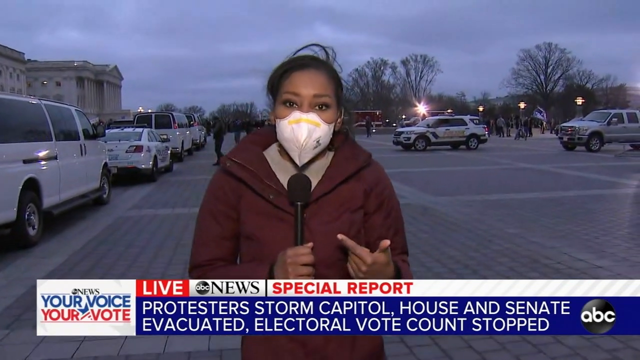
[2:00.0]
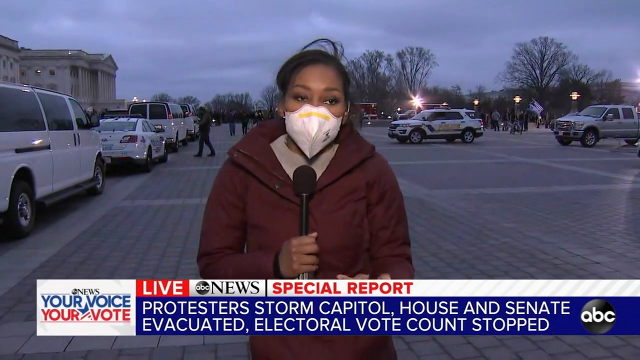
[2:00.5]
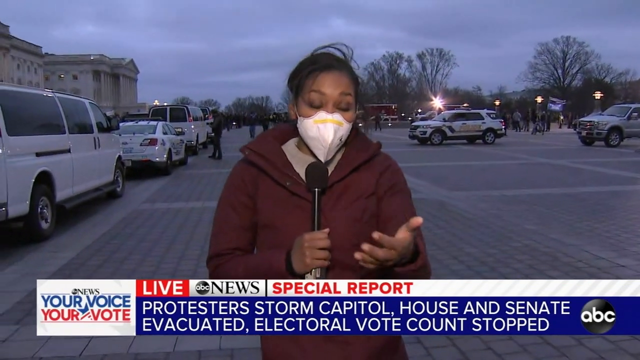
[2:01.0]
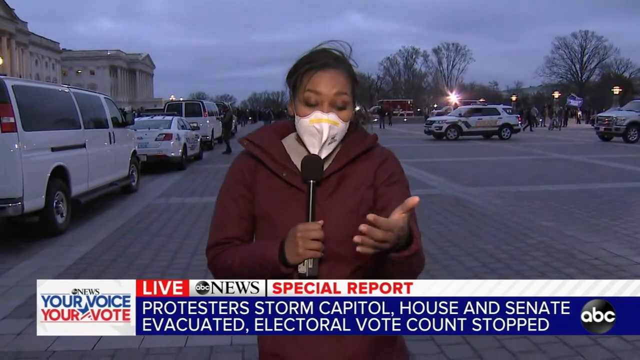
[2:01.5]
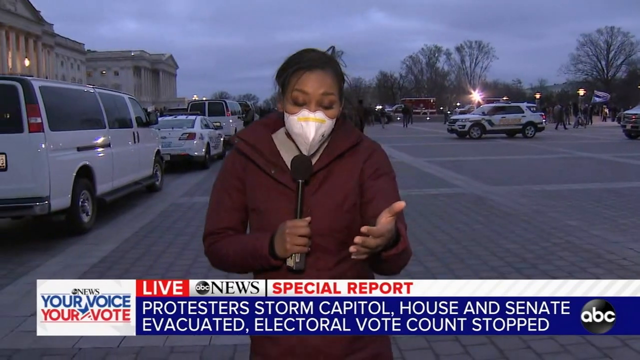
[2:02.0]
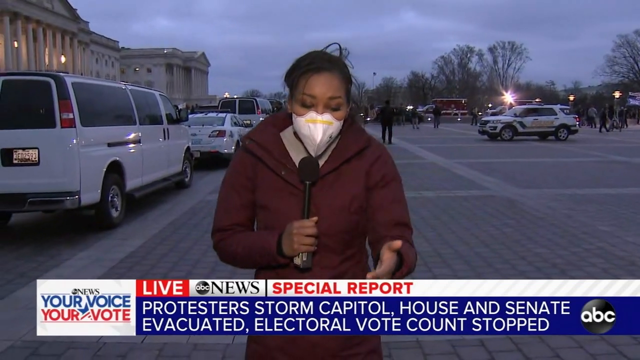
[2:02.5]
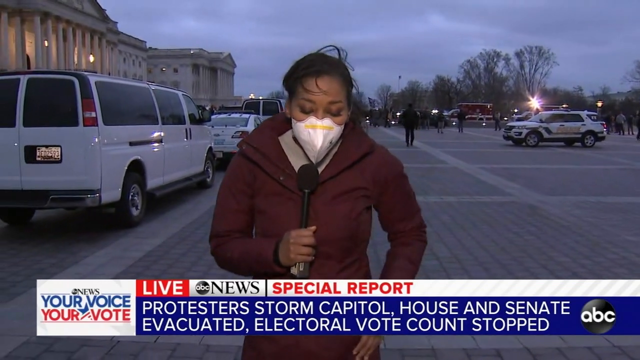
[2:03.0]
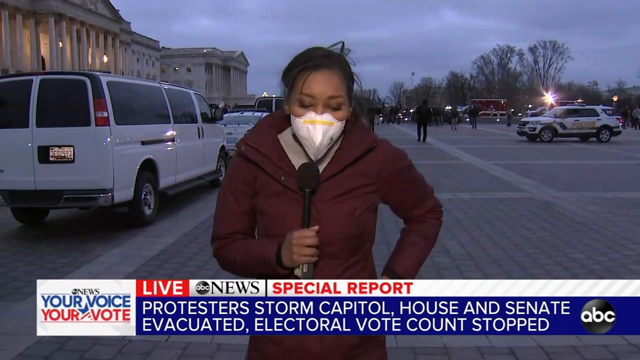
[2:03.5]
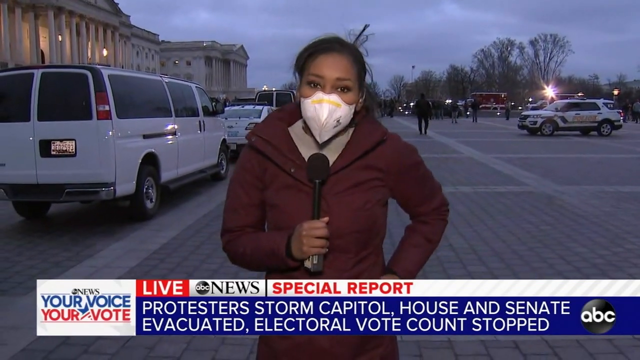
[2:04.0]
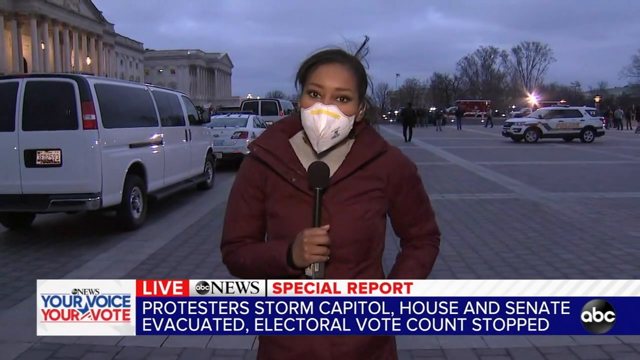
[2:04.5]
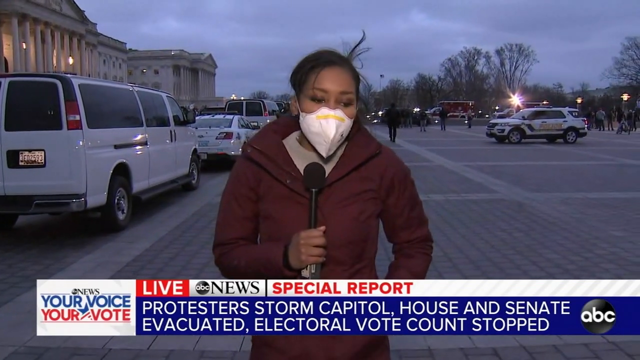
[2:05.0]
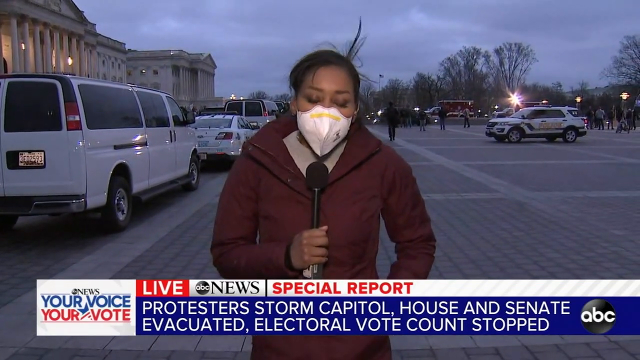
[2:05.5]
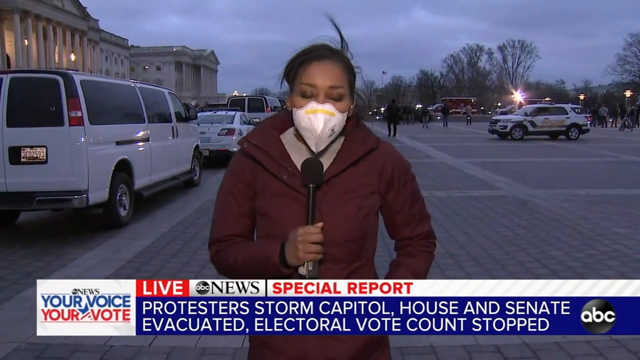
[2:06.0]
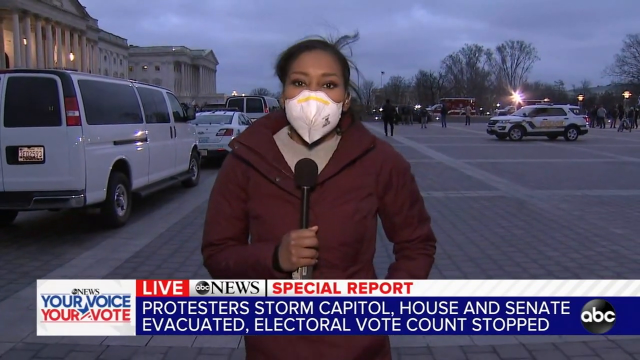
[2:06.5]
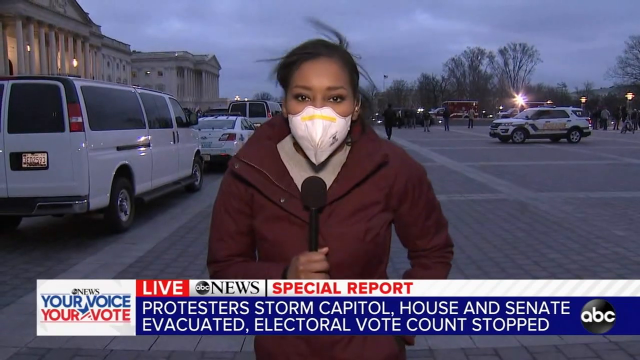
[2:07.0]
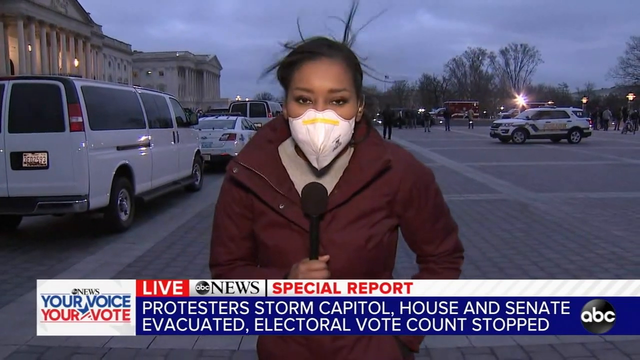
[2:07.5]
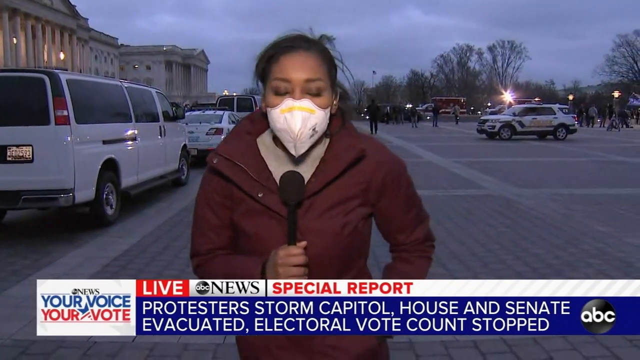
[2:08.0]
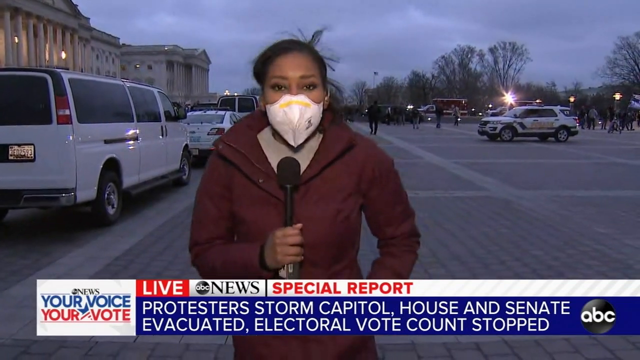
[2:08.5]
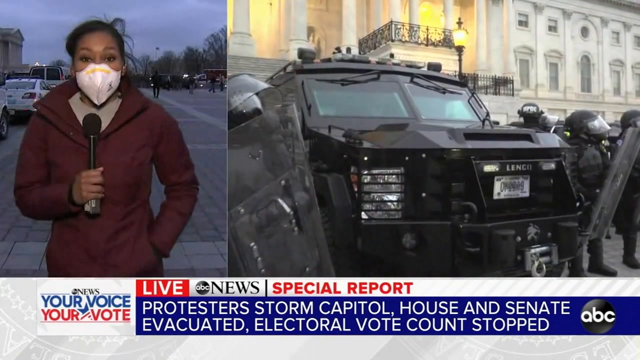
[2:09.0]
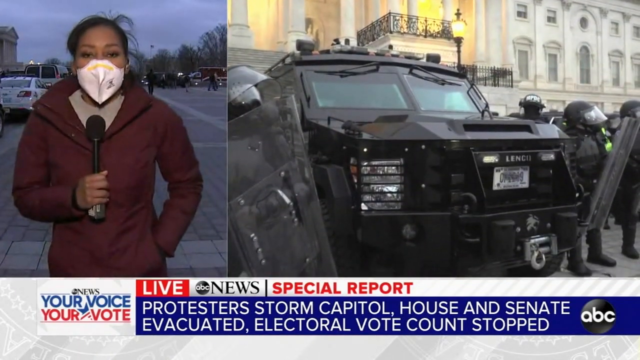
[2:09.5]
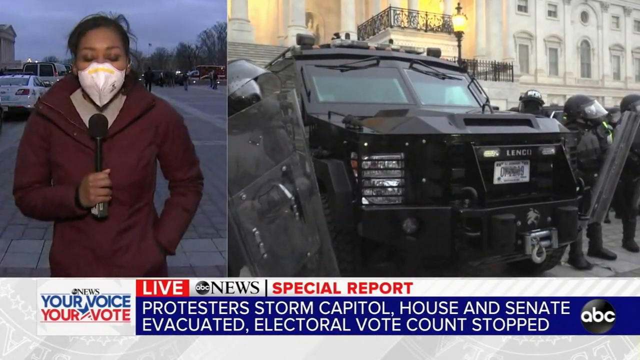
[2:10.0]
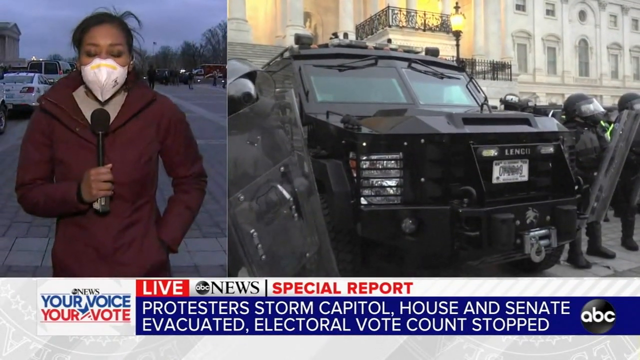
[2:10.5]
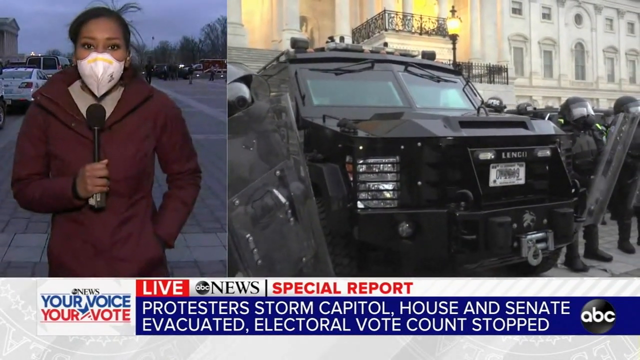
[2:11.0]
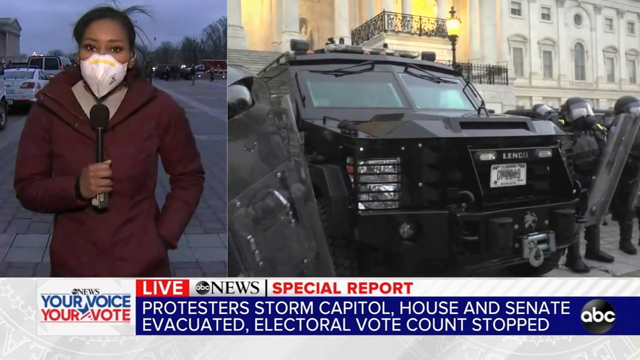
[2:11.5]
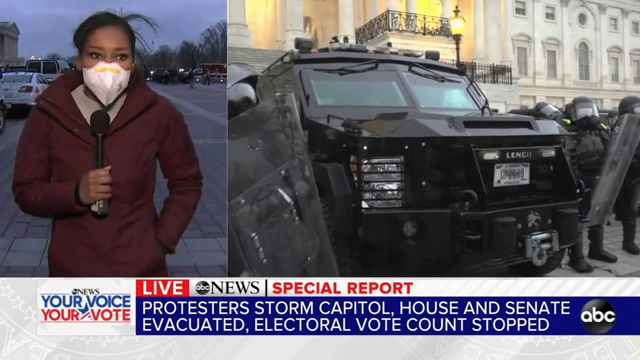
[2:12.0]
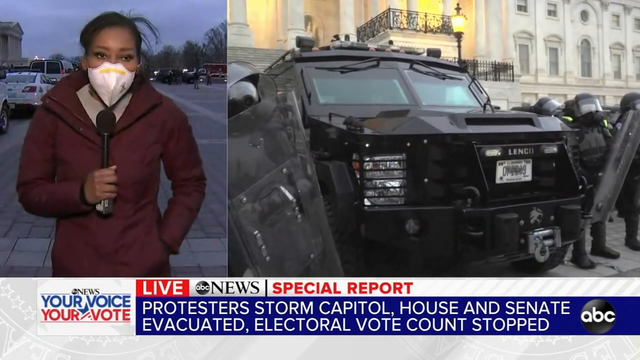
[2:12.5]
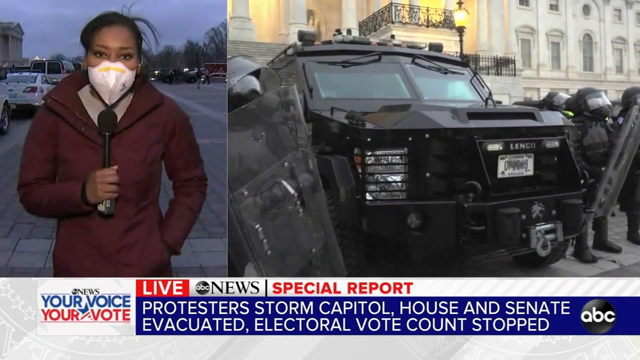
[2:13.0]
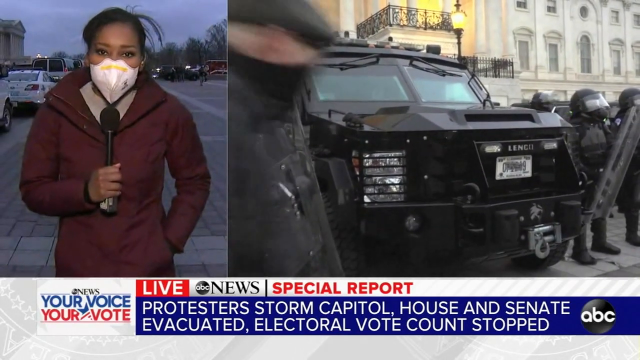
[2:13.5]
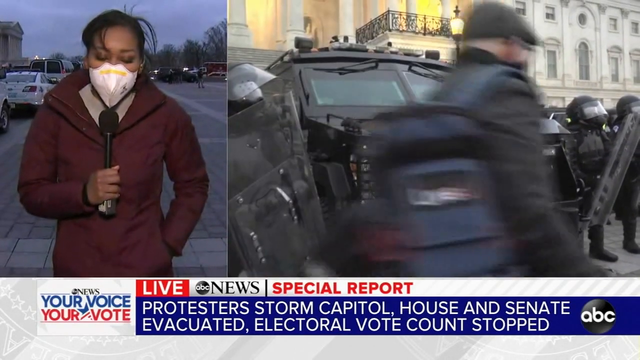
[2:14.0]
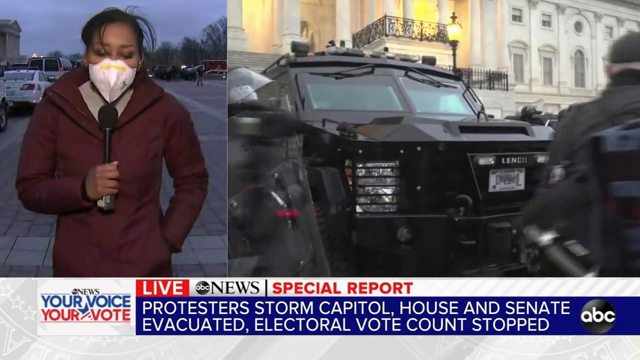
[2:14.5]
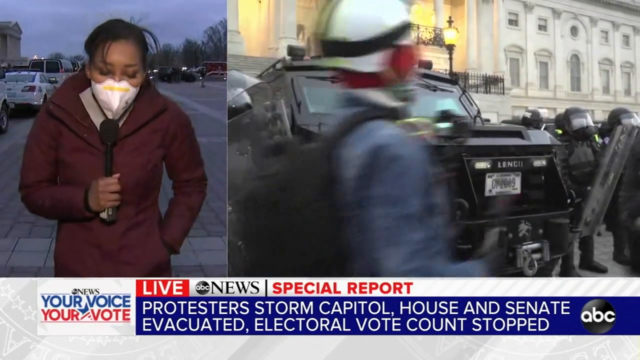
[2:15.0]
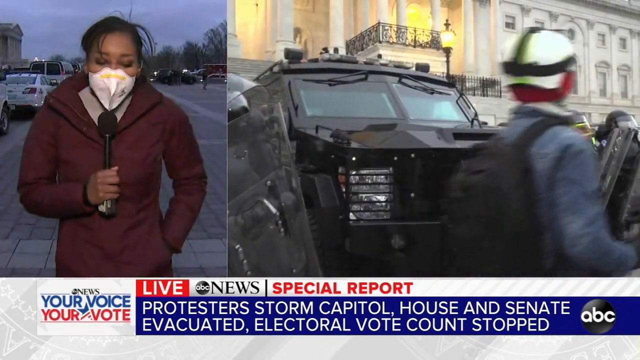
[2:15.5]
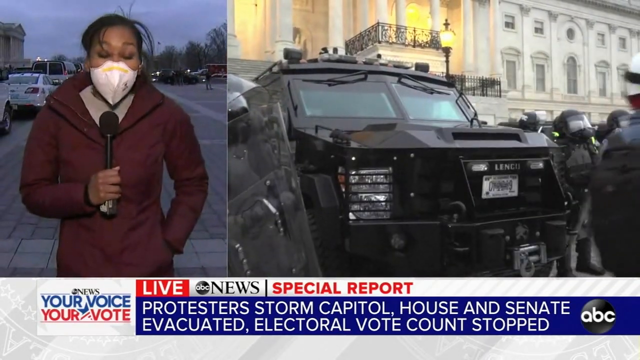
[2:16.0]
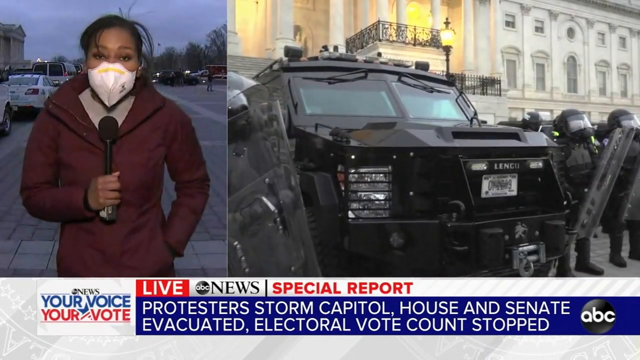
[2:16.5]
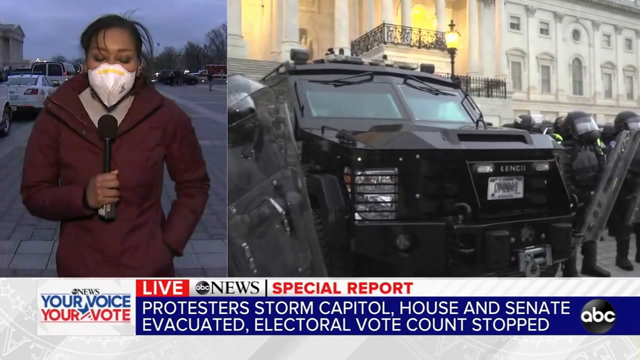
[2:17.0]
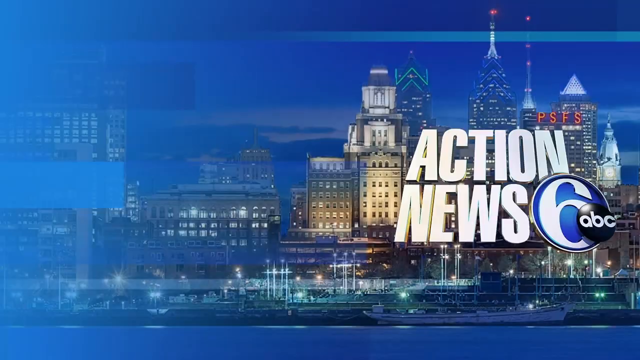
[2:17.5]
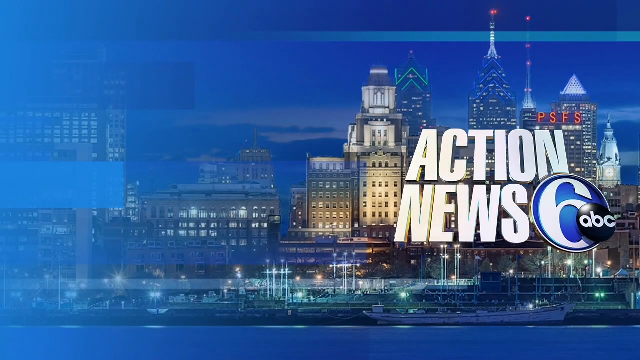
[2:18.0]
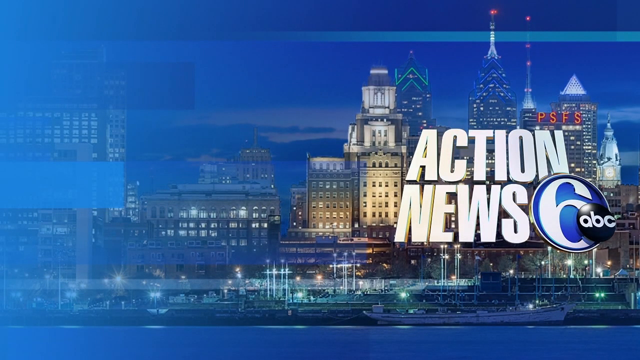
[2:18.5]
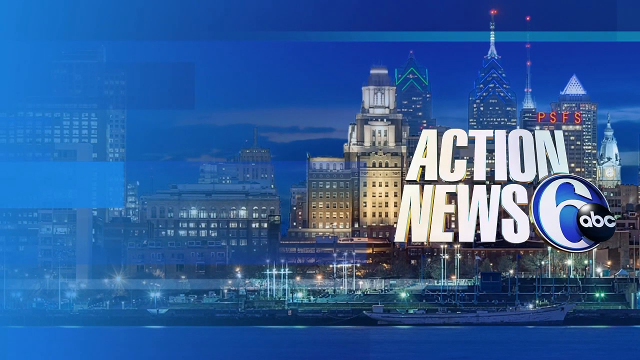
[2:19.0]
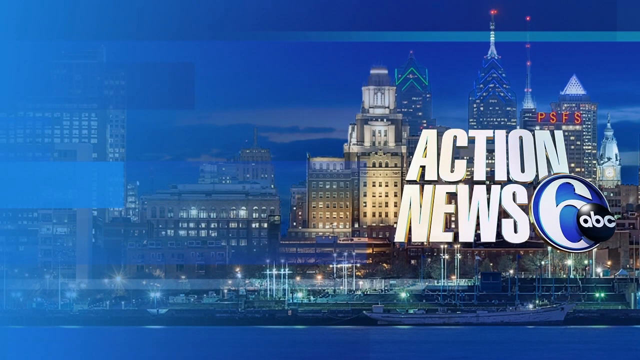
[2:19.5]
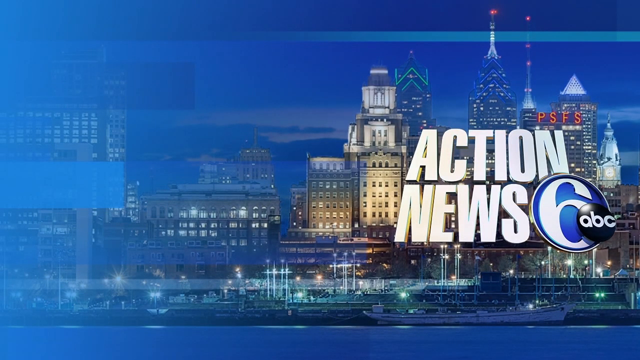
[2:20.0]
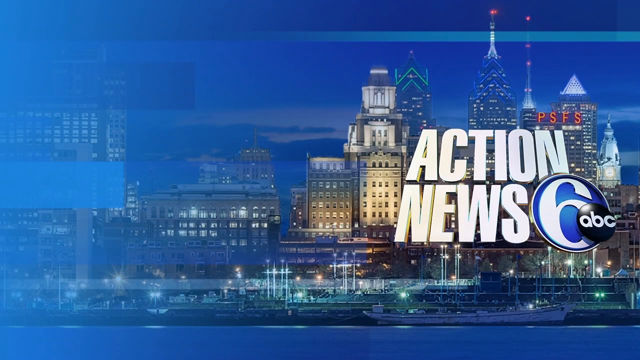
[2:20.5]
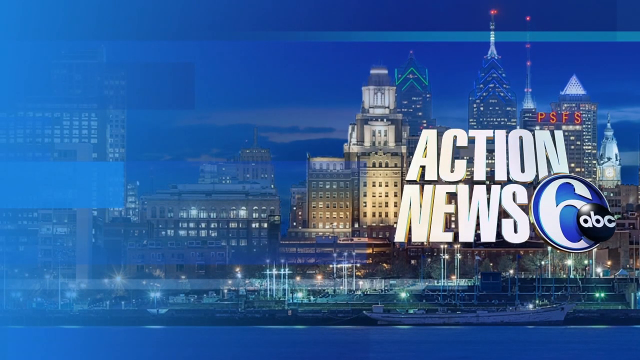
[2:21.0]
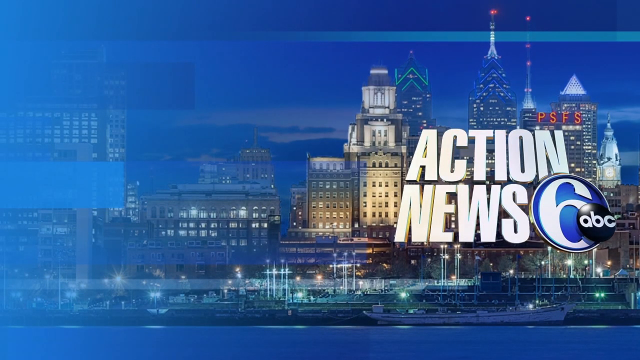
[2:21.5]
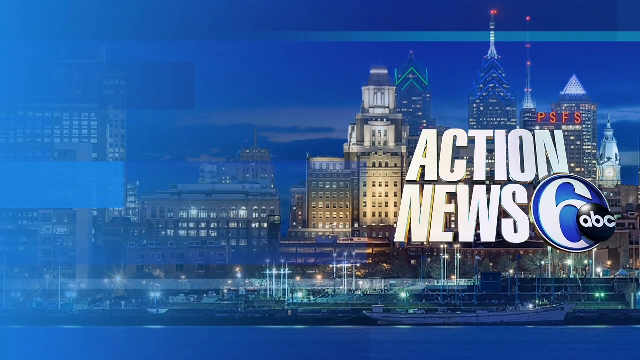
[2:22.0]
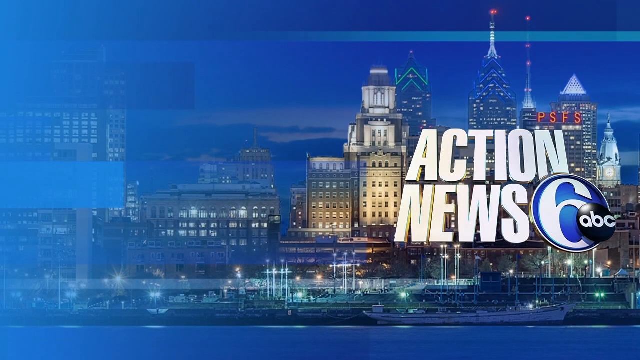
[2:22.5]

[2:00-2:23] The live special report continues. There is heavy rain and a rain shower. Police carry heavy guns across the capital house. The protest on the other side is growing. People and officials are still outside.